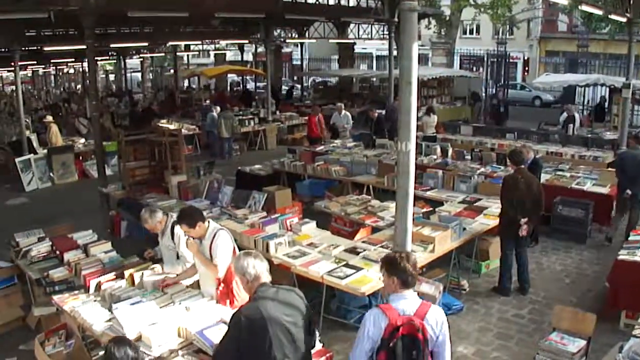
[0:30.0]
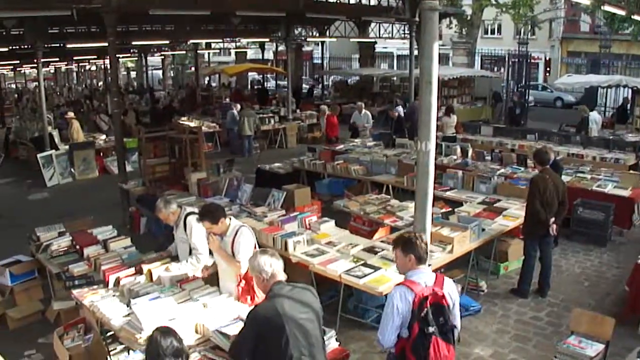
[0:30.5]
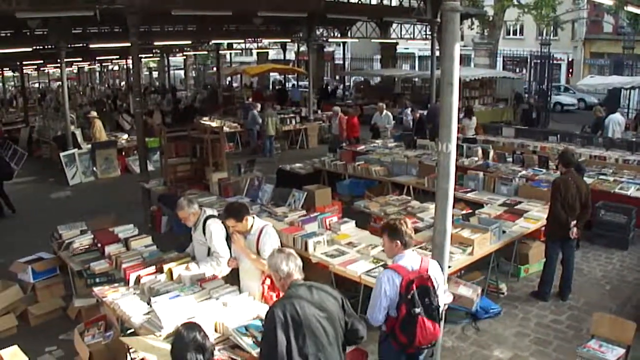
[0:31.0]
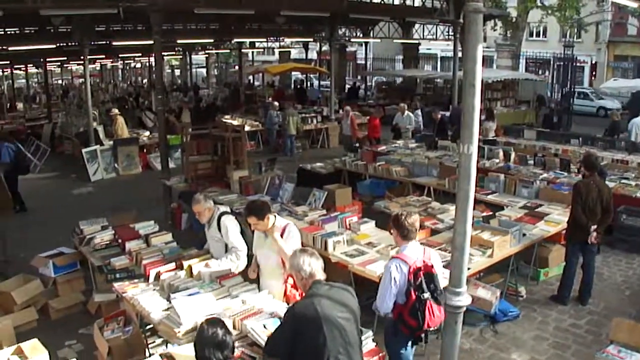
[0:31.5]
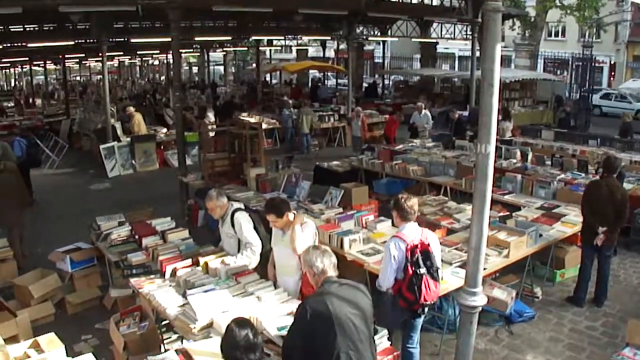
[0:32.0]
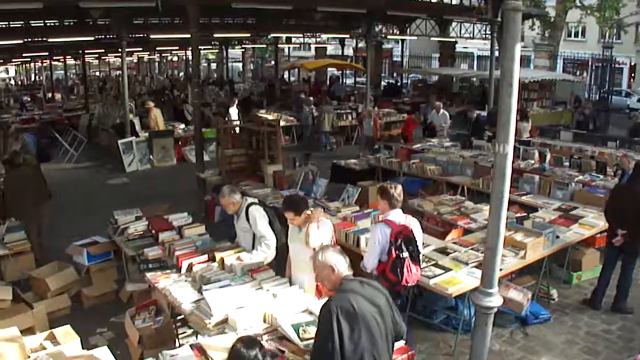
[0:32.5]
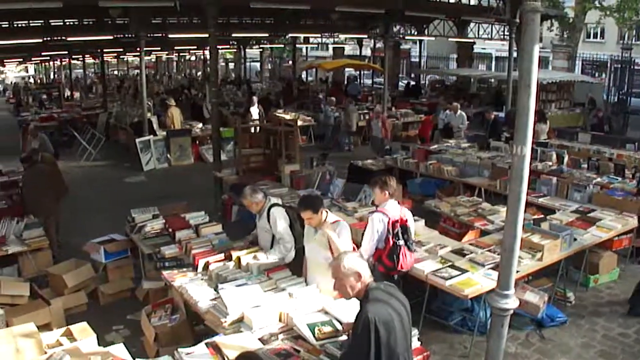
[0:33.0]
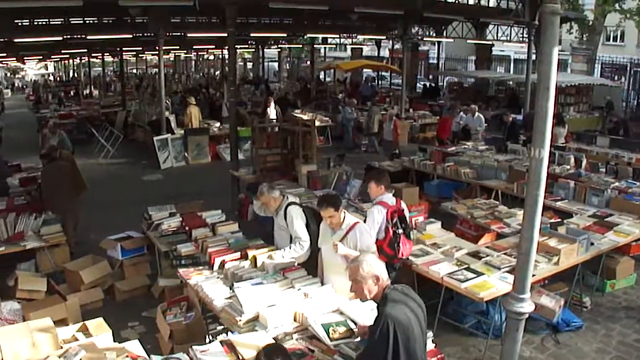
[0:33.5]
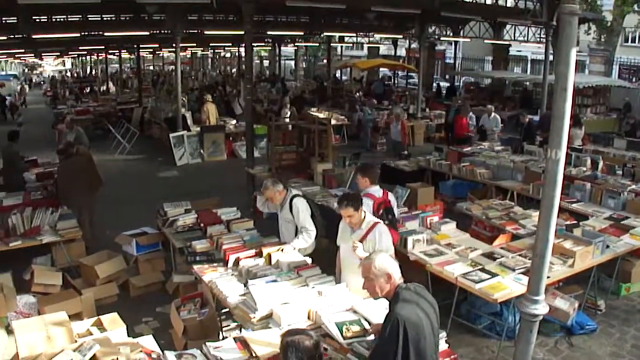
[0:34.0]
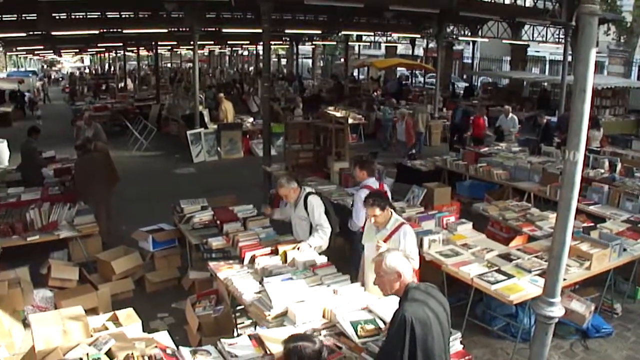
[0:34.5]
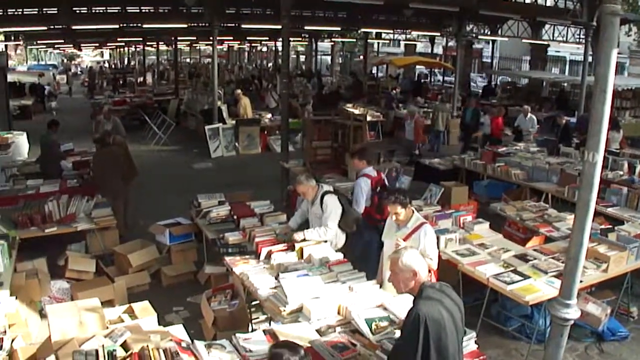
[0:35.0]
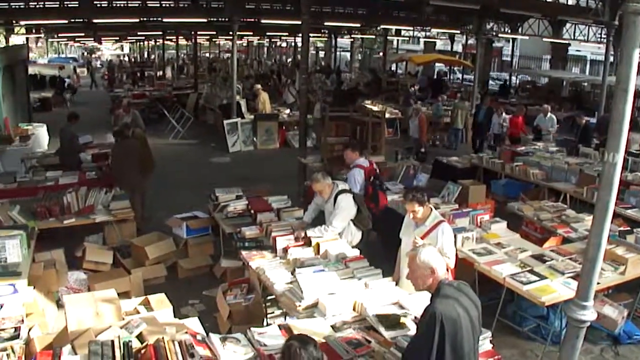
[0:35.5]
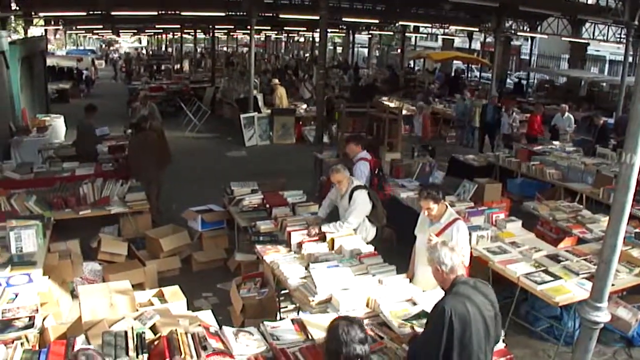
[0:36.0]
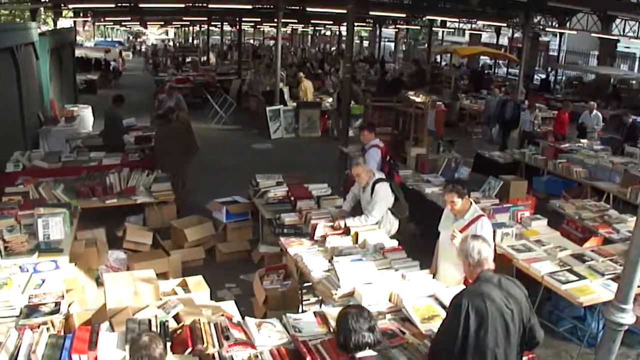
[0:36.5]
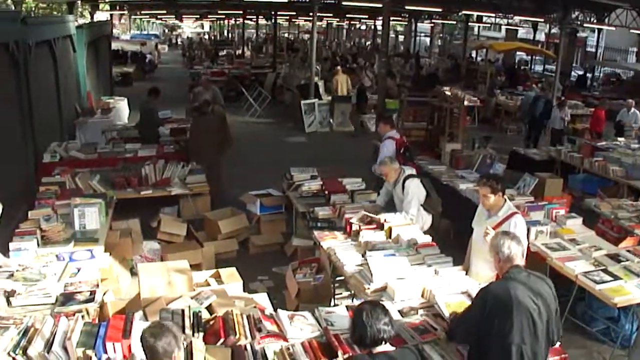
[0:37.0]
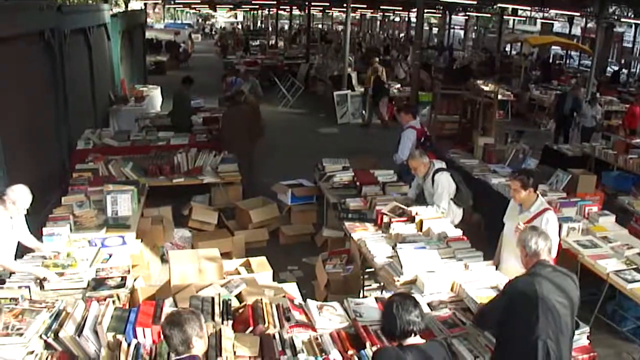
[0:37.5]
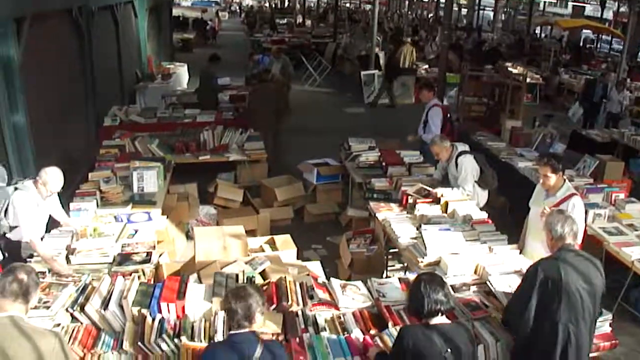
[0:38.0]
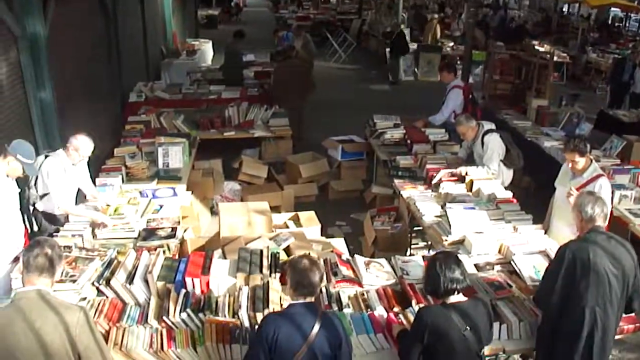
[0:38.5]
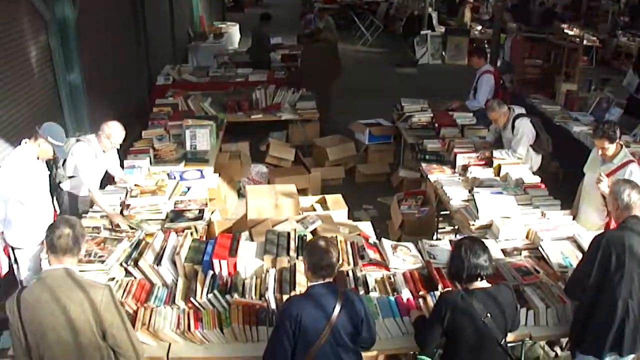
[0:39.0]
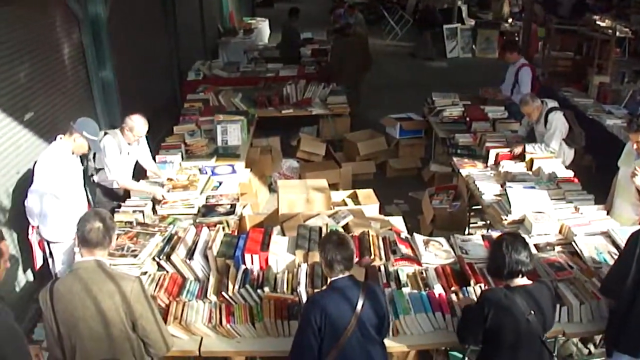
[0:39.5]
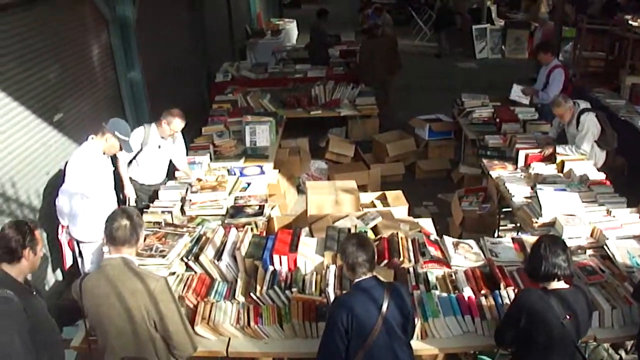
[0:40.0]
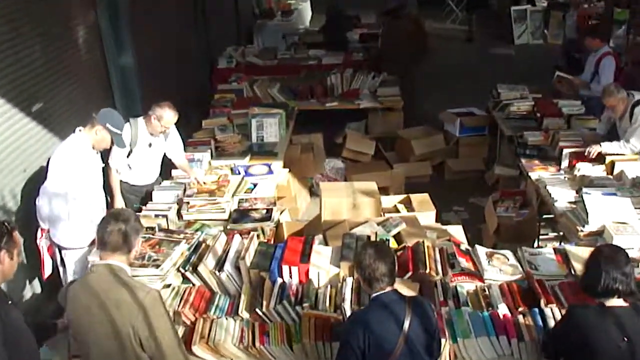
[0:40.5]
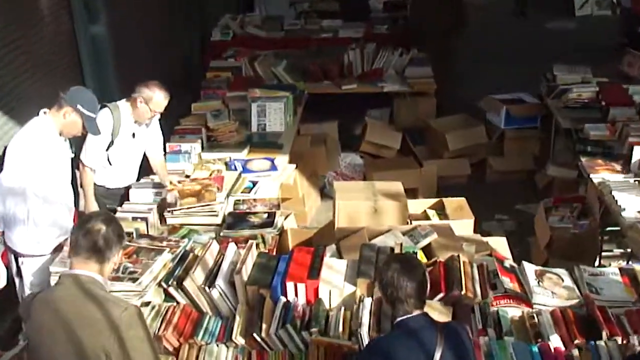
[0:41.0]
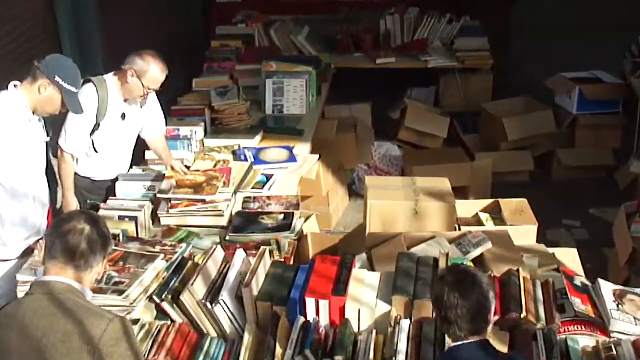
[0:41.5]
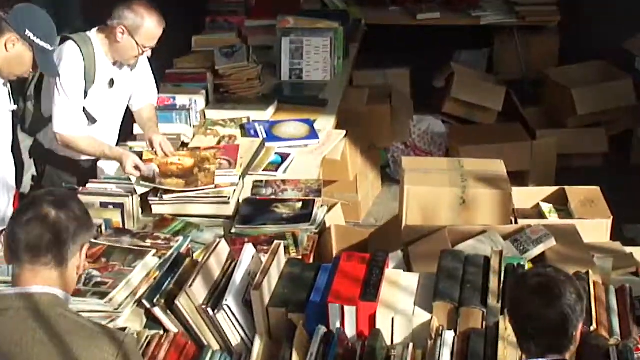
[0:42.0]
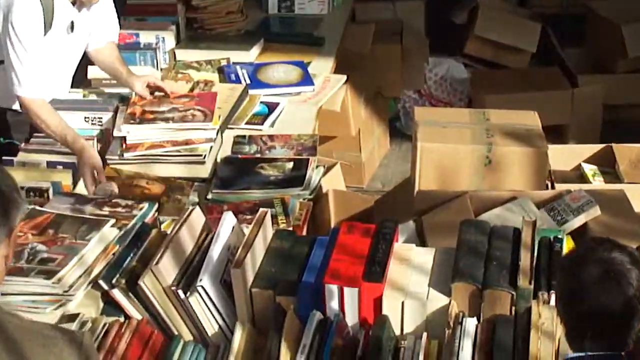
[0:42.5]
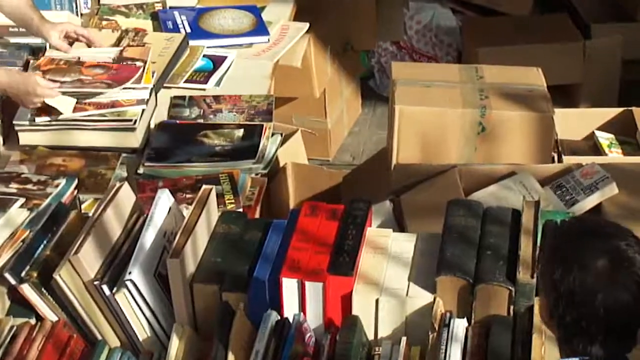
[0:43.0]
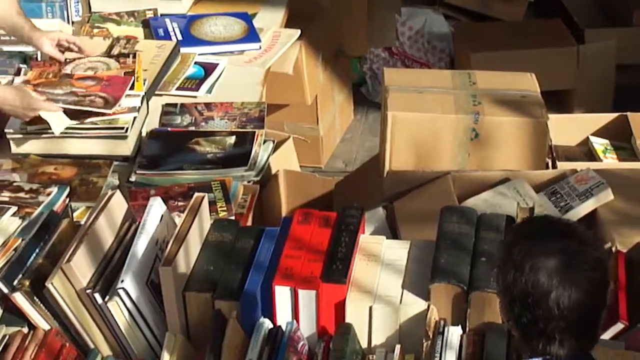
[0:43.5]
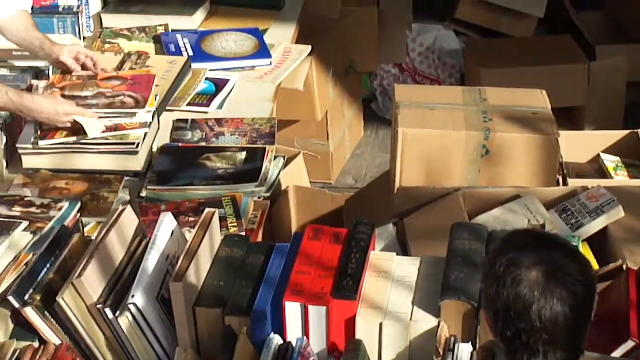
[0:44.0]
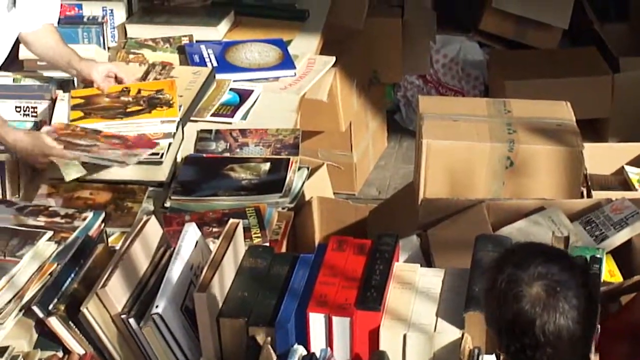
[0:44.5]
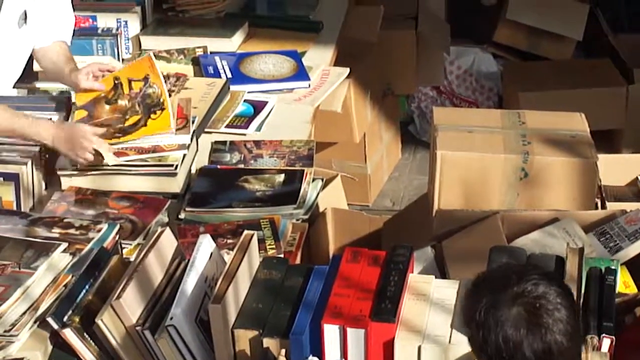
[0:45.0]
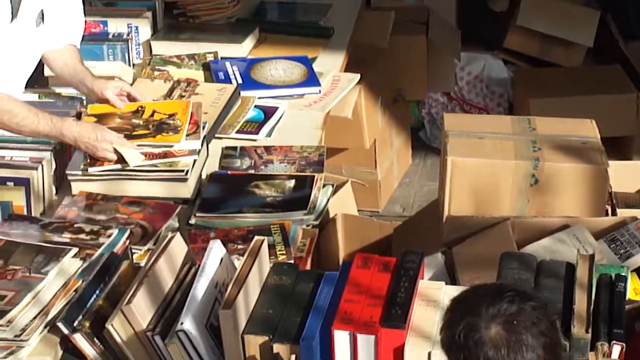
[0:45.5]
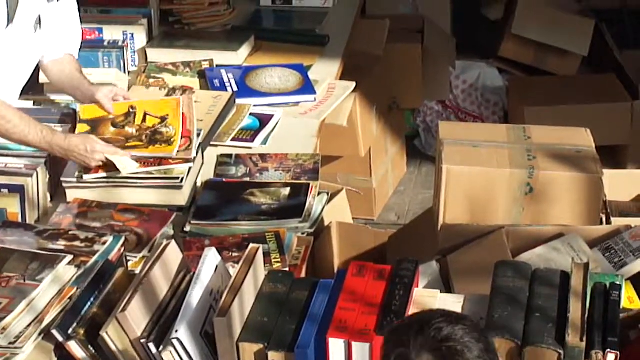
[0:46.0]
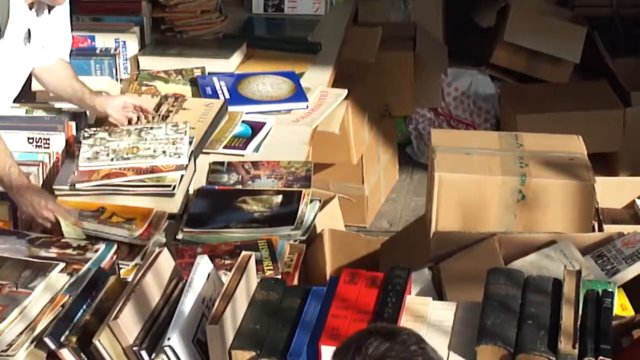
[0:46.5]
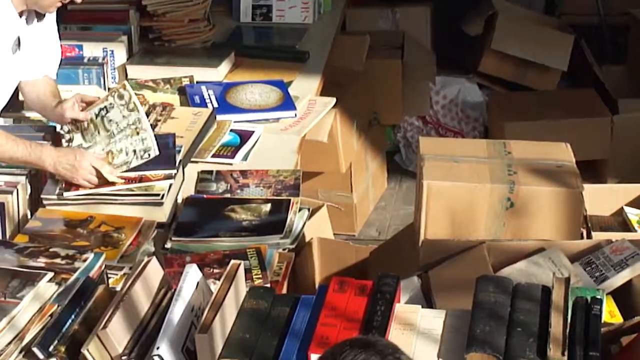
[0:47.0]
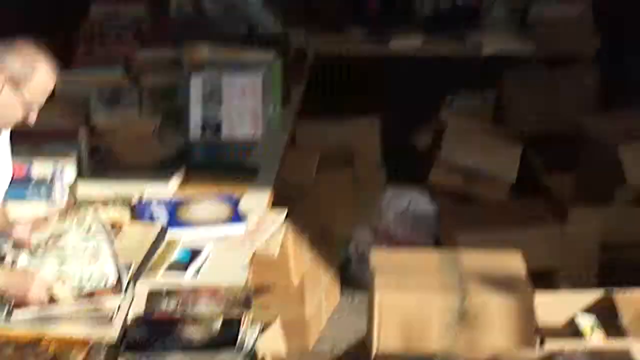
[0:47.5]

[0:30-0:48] The view is as if looking down at an outdoor street market, focused on a very large array of used books set up on tables. At least 10 shoppers mill around the books, looking and browsing. It is daytime, and the fair or market appears to be set up on a main street in a charming village or town. Beyond the book sale, deeper into the crowd, are other tables, some possibly displaying framed artwork in the background. A close-up shows a person going through soft-covered magazine publications on the left side of the screen. There is a lot of shading where the sale takes place; although it is outdoors, a makeshift roof has been put over it, held up by many poles. As the camera pans slowly from right to left and then left to right, other markets are visible in the background.